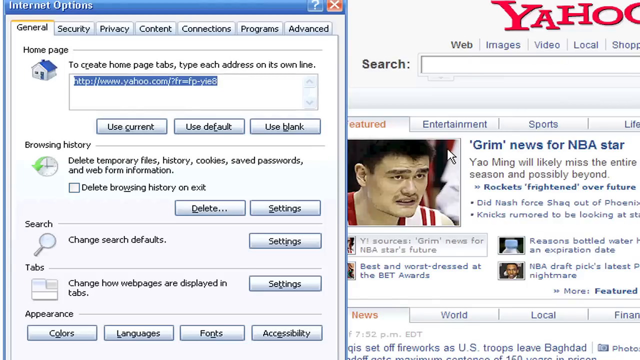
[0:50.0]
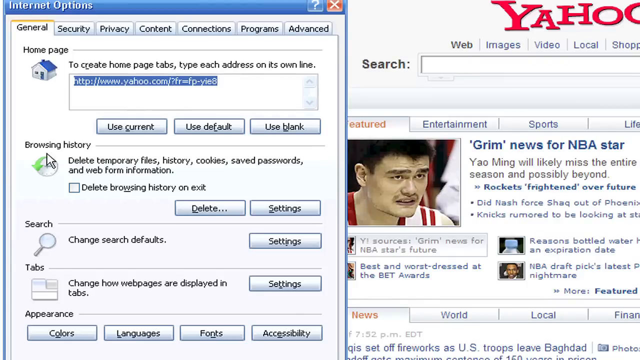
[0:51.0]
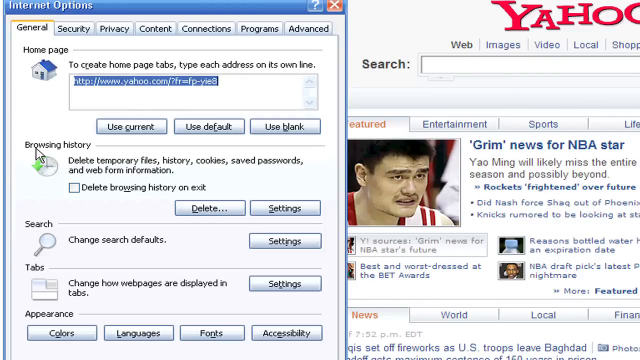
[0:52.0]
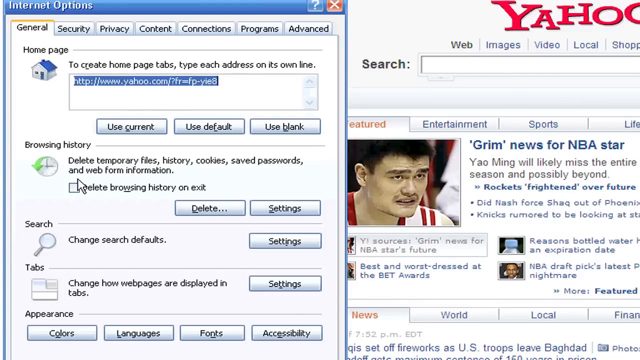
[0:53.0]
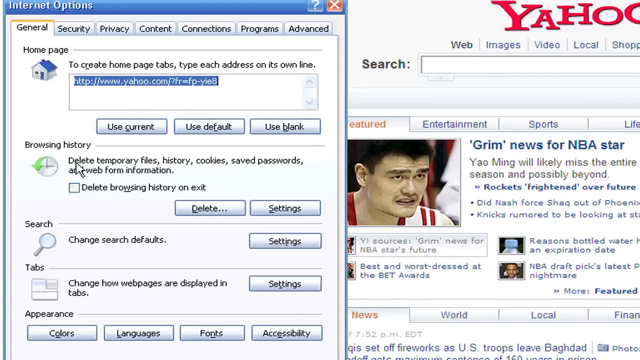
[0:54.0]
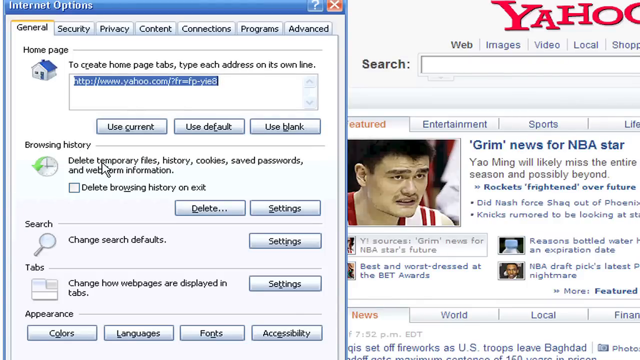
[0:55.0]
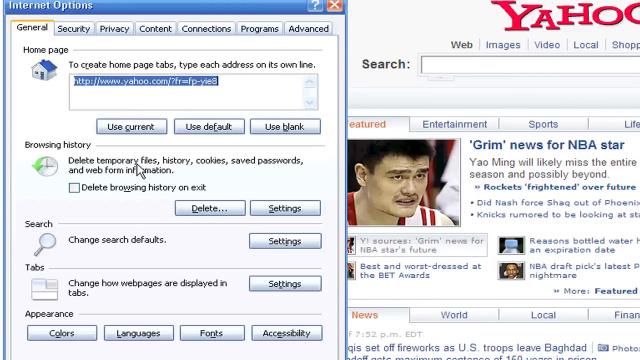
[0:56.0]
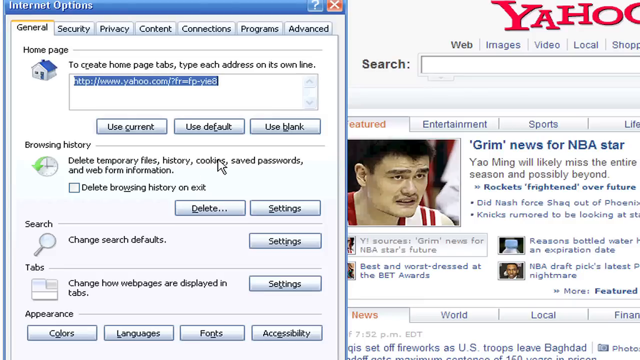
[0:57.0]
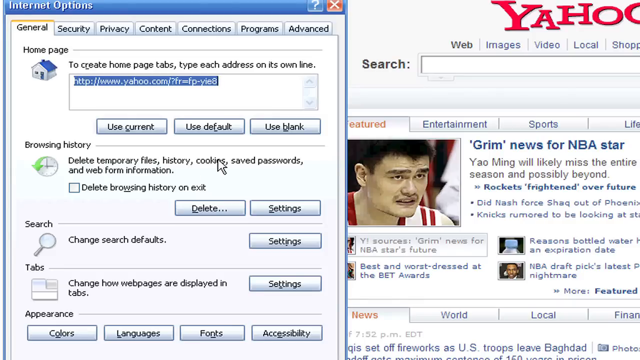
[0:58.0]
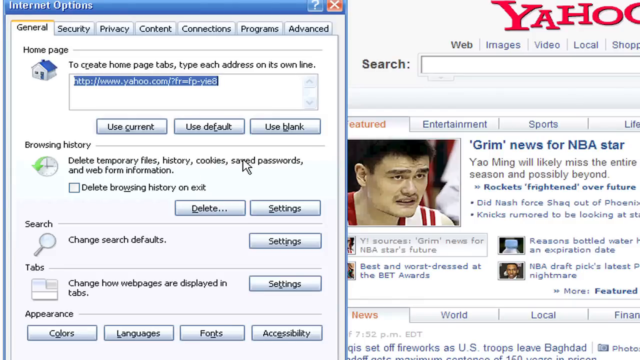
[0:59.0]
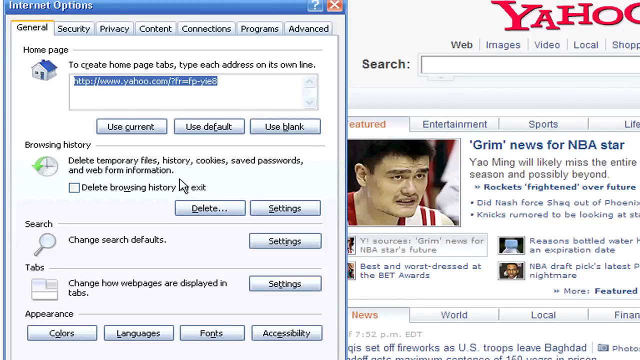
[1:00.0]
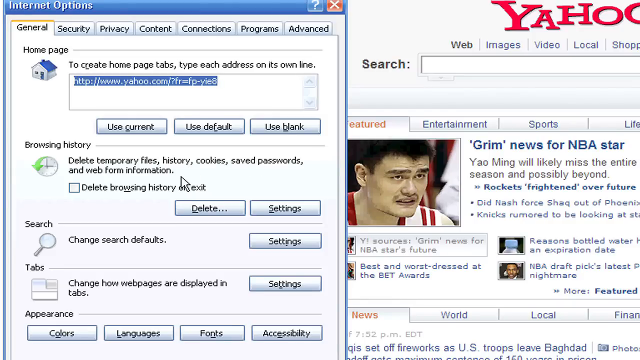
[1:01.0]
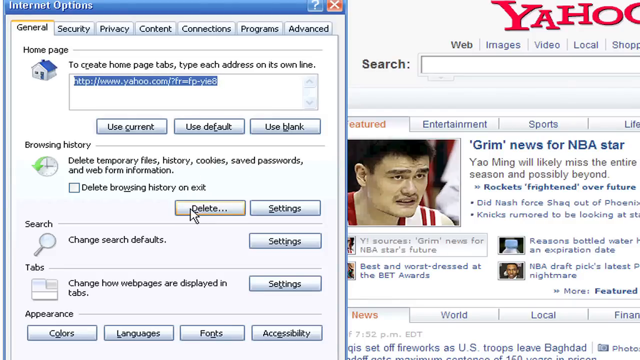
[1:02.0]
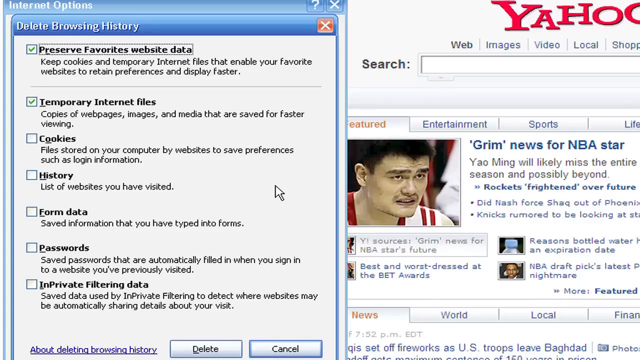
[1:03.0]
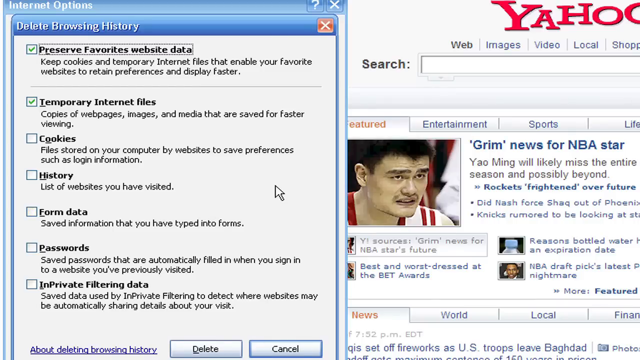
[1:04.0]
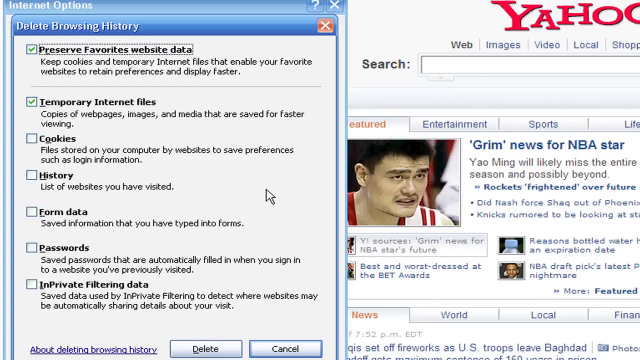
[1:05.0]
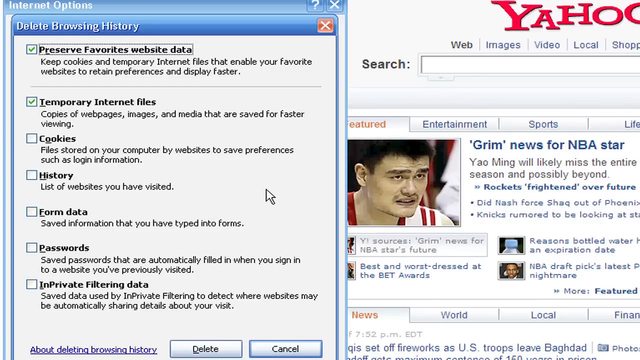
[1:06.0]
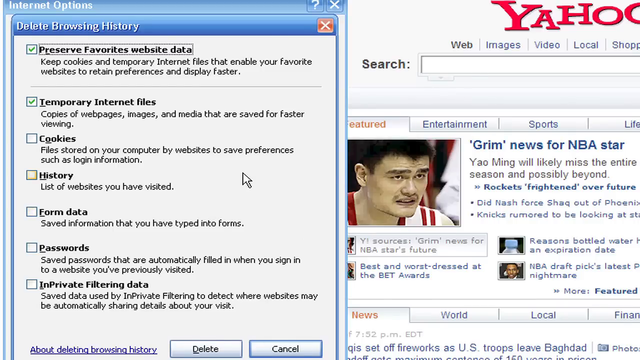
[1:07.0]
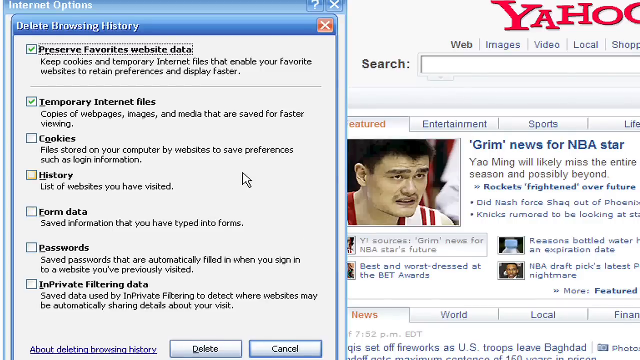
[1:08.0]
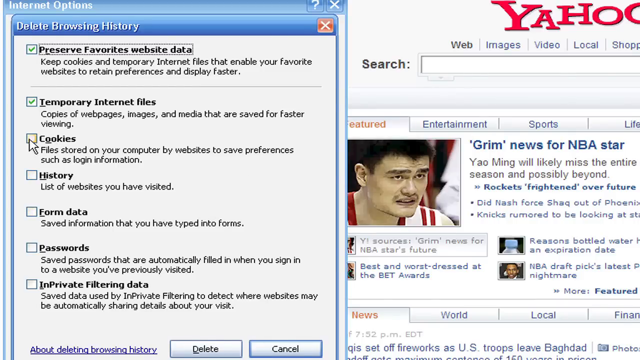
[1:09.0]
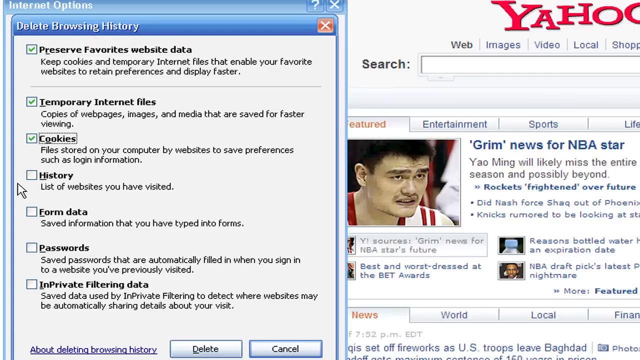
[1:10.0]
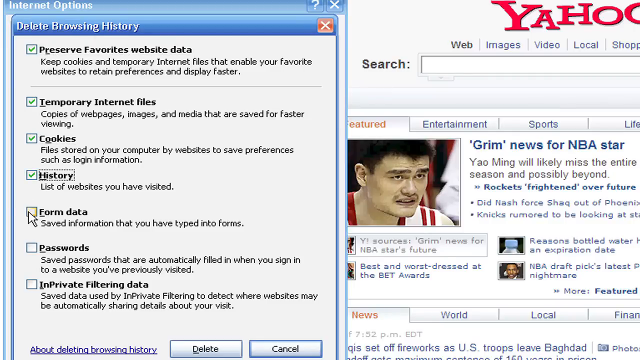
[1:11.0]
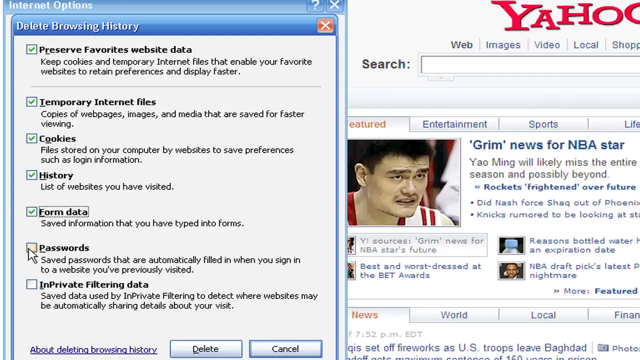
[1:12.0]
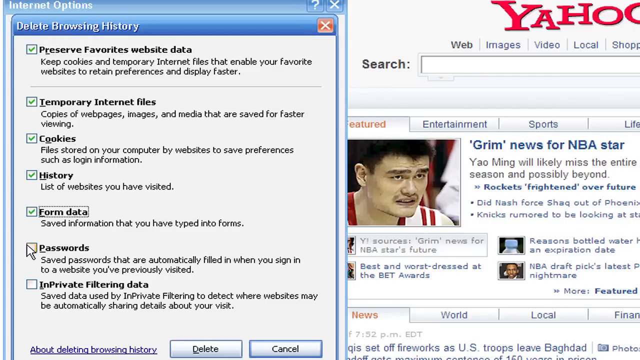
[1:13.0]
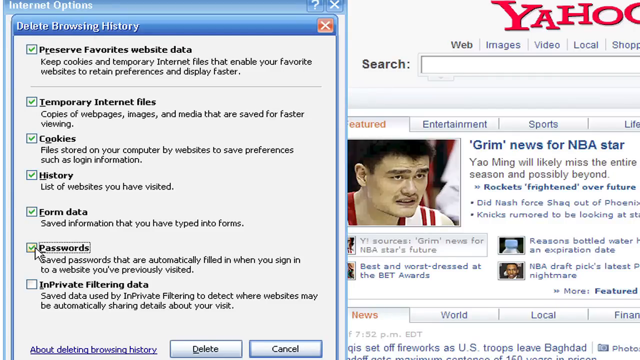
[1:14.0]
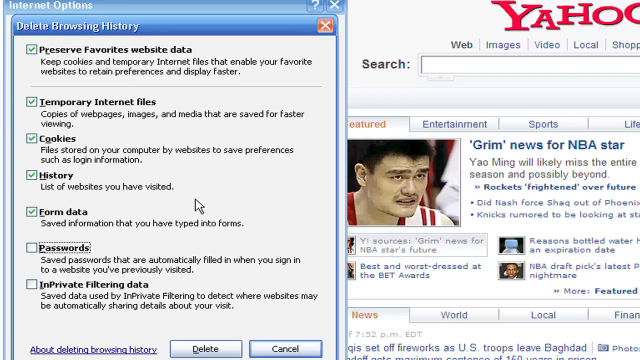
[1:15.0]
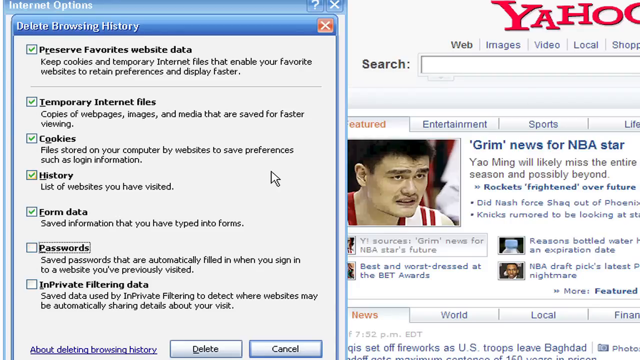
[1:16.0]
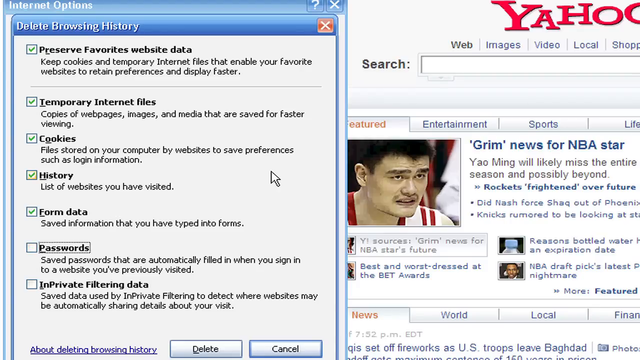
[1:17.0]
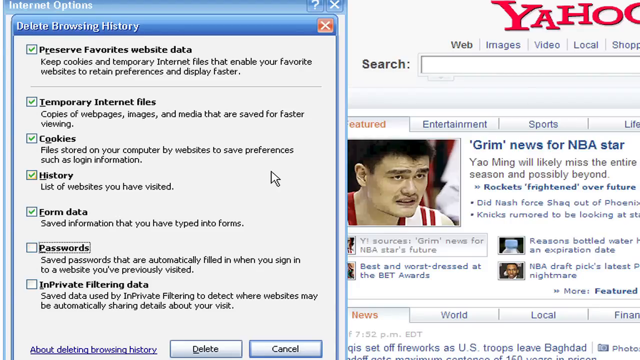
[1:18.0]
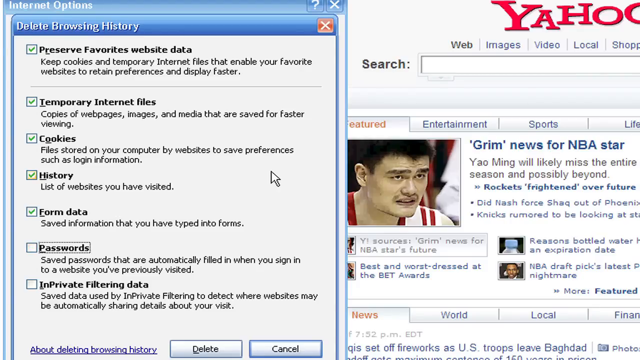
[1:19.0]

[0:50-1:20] The person selects different options in the browser. A window titled "Internet Options" is open over the page, with tabs for "General, Security, Privacy, Content, Connections, Programs, Advanced". Below, it reads "Homepage" and "To create homepage tabs, type each address on its own line", with "http://www.yahoo.com" entered. Below that it reads "Browsing history", "Delete temporary files, history, cookies, save passwords, and web information", "Search", "Change search defaults", "Tabs" and "Change how webpages are displayed in tabs". On the right side in the background the Yahoo page is open, showing "grim news for NBA star Yao Ming will most likely miss the entire season and possibly beyond", "Rockets frightened over future", "Did Nash force Shaq out of Phoenix?" and "Nick's rumored to be looking at star". The person highlights something and hovers over the delete option for browsing history, which shows "Preserve favorites website data".